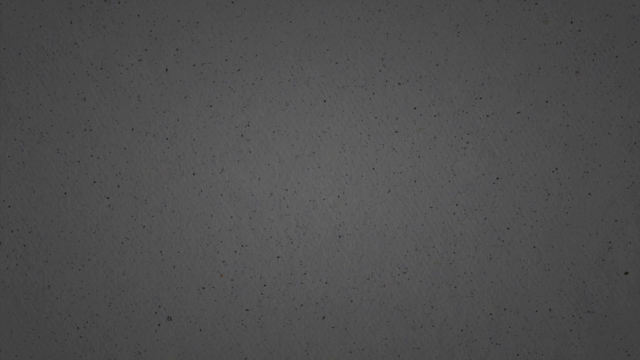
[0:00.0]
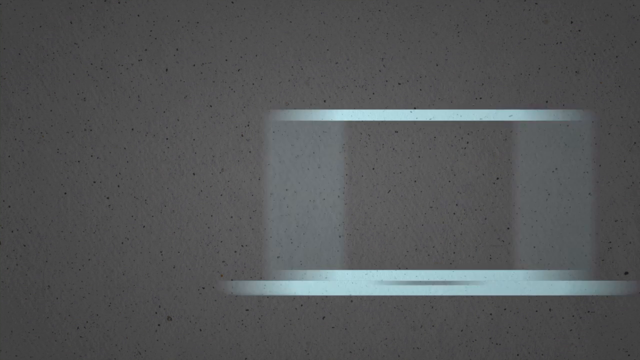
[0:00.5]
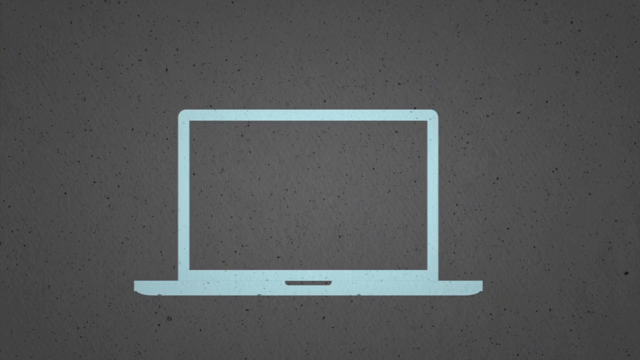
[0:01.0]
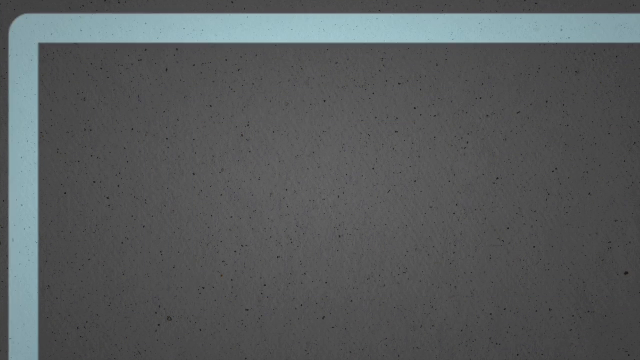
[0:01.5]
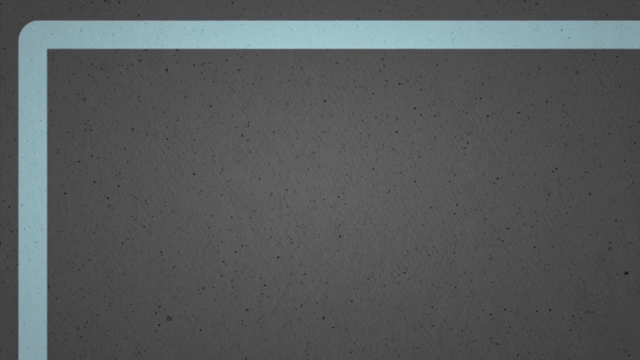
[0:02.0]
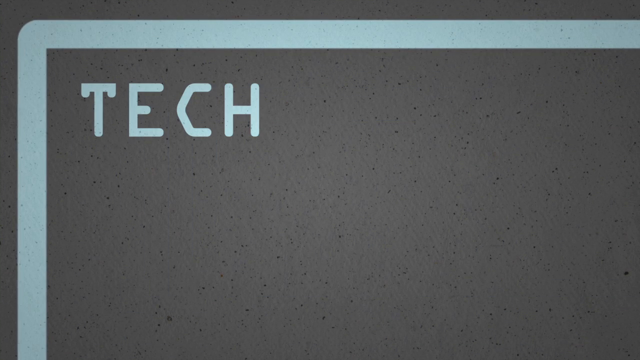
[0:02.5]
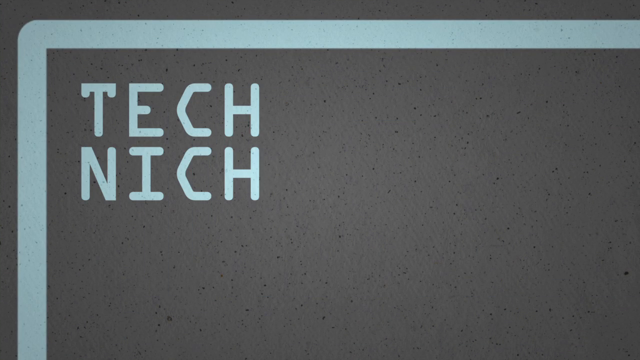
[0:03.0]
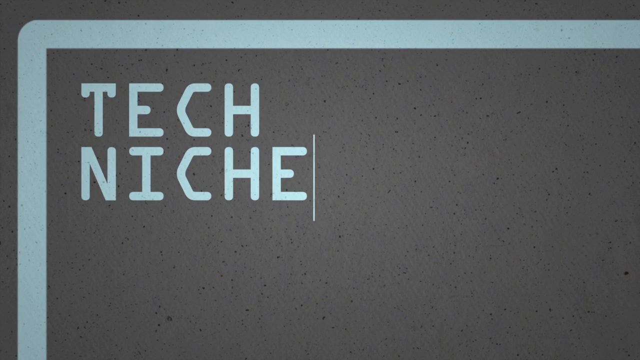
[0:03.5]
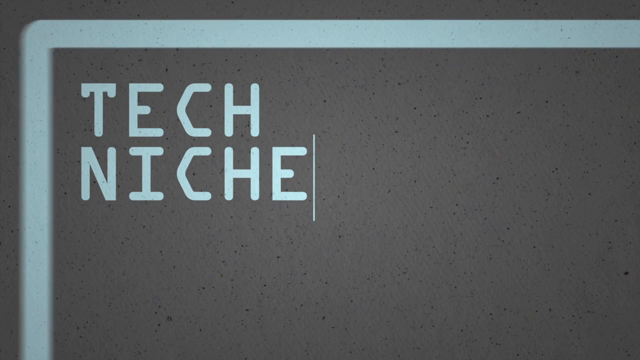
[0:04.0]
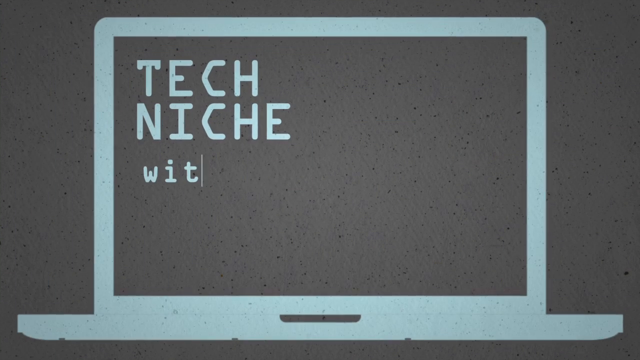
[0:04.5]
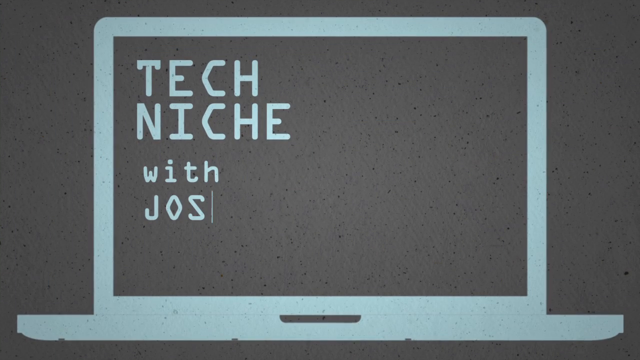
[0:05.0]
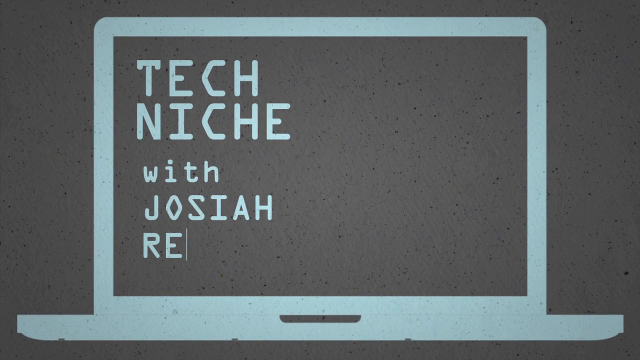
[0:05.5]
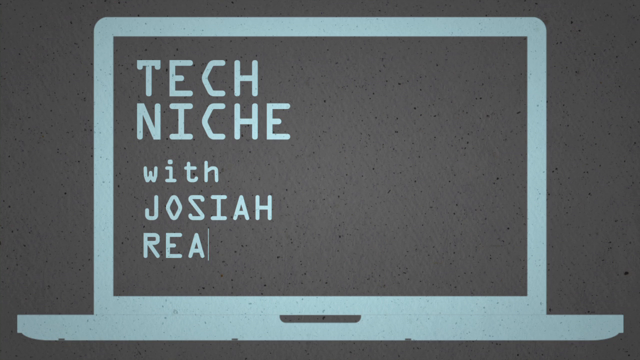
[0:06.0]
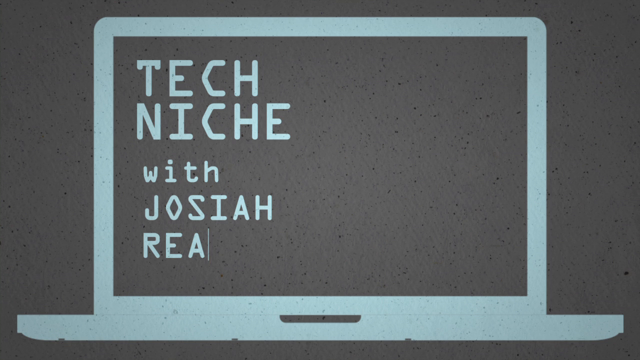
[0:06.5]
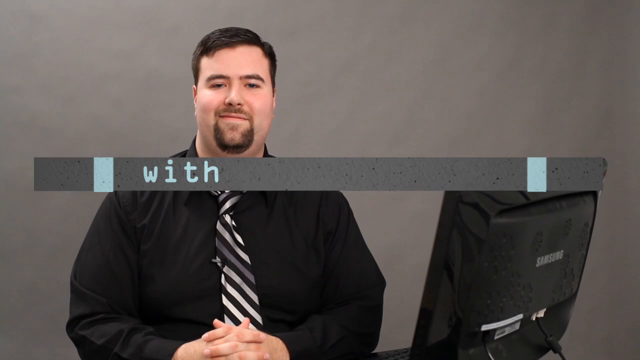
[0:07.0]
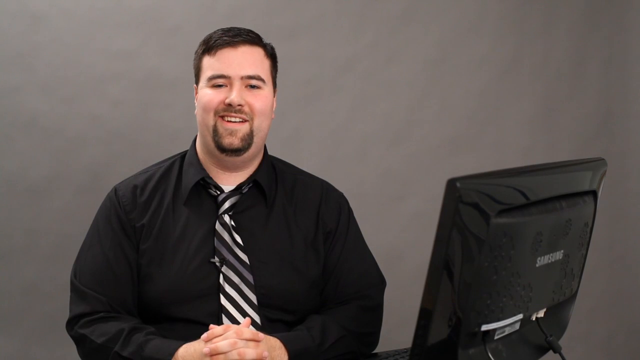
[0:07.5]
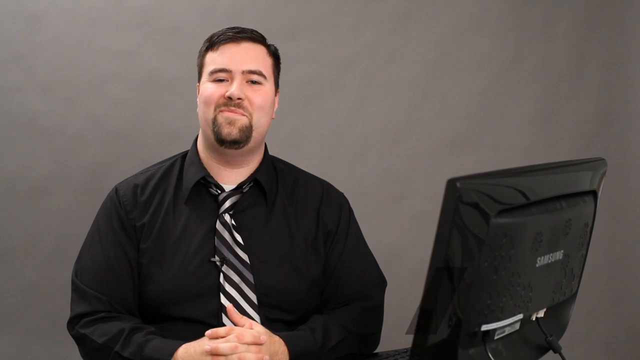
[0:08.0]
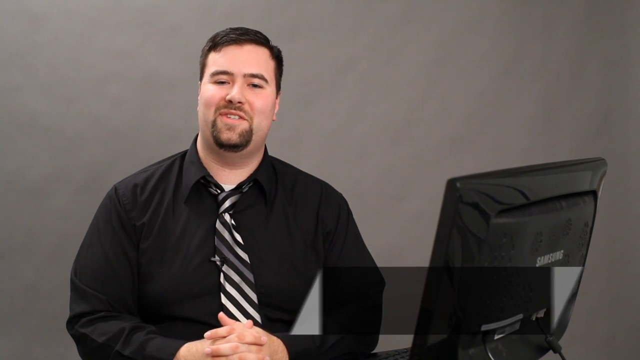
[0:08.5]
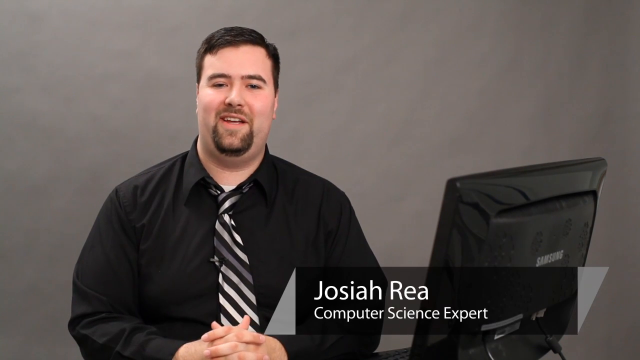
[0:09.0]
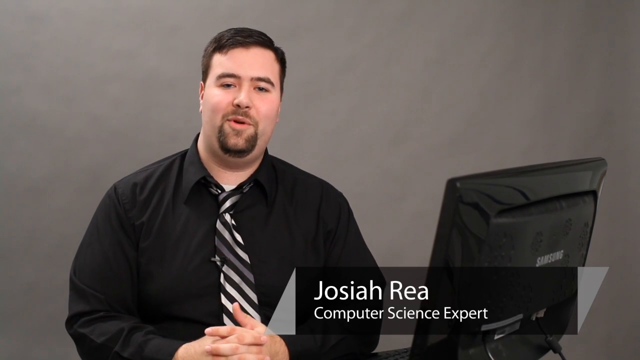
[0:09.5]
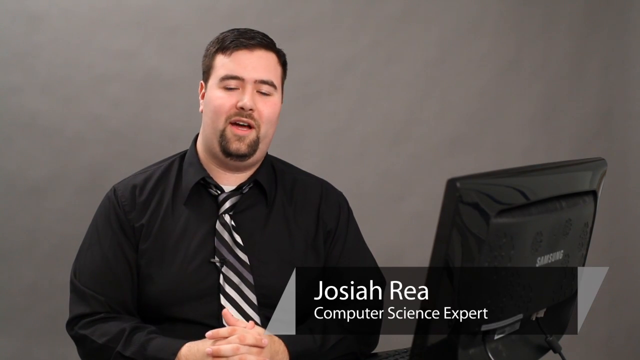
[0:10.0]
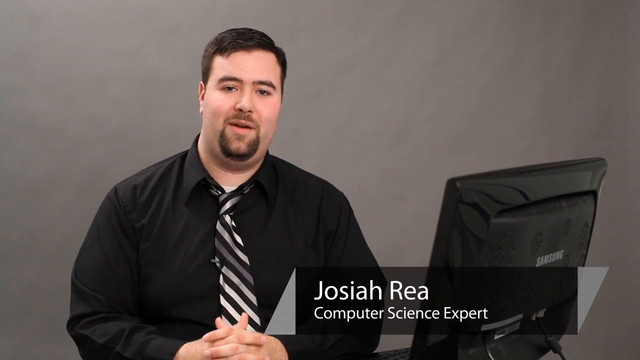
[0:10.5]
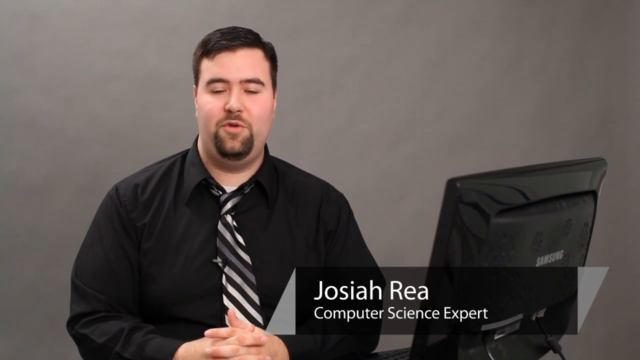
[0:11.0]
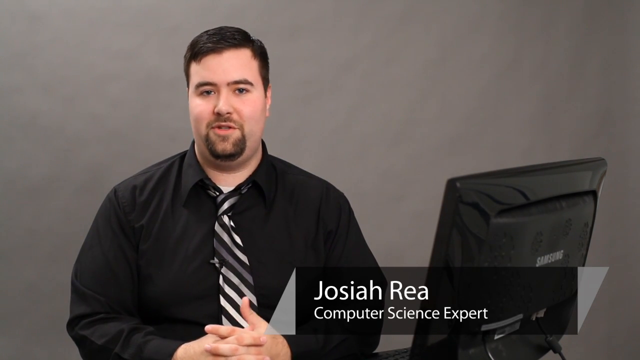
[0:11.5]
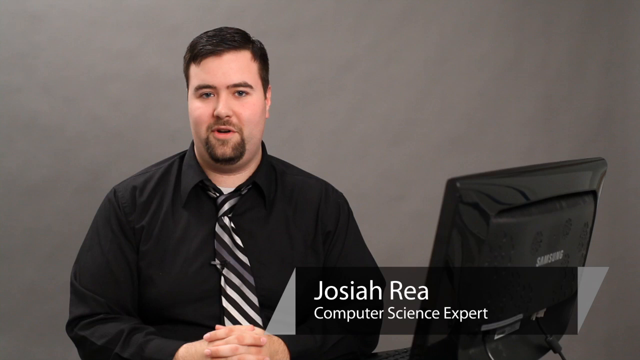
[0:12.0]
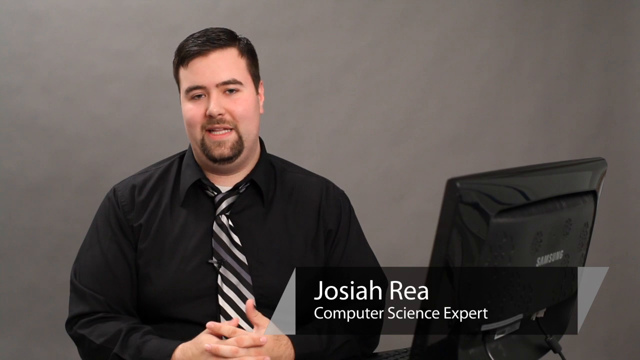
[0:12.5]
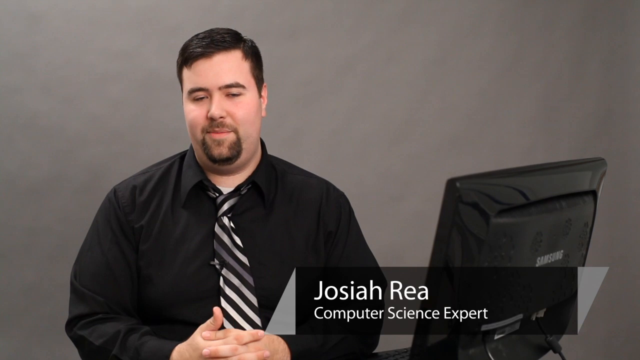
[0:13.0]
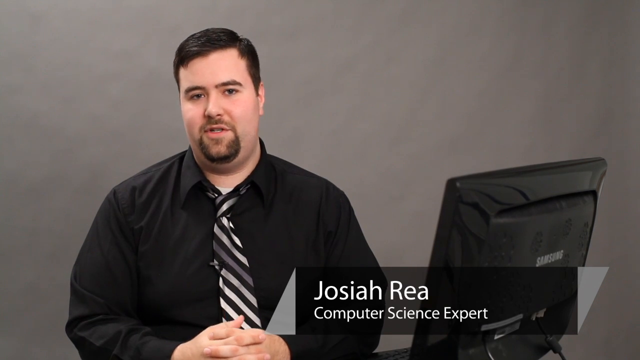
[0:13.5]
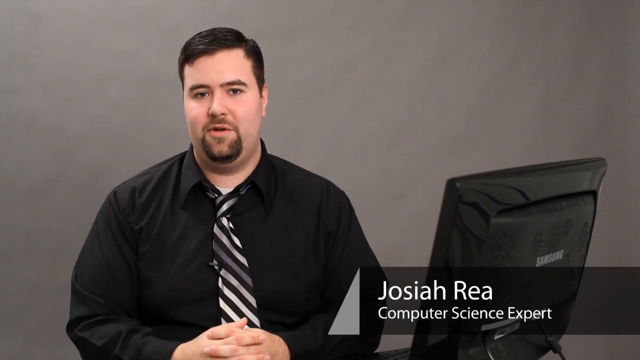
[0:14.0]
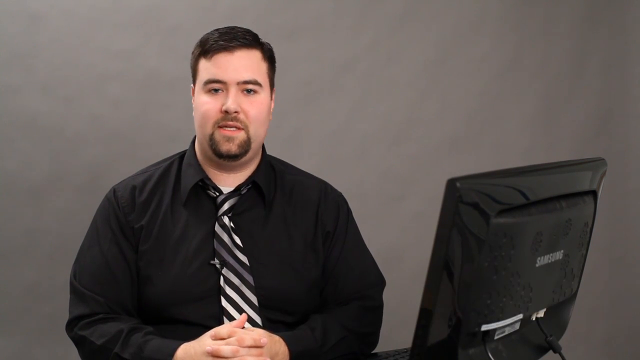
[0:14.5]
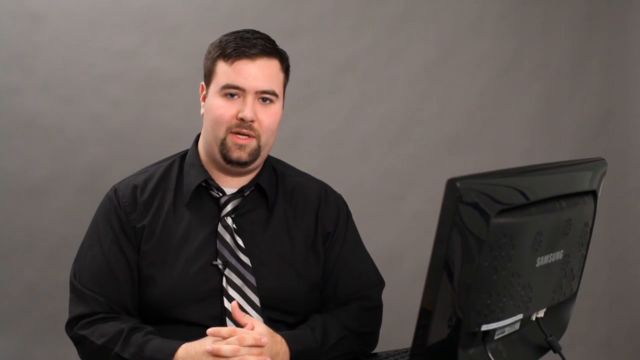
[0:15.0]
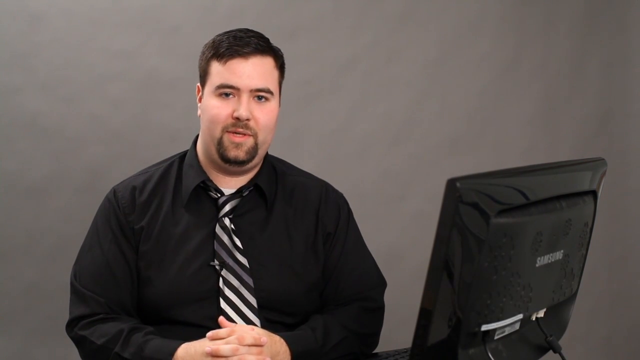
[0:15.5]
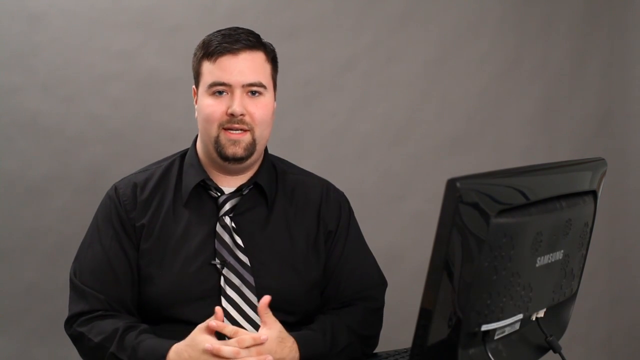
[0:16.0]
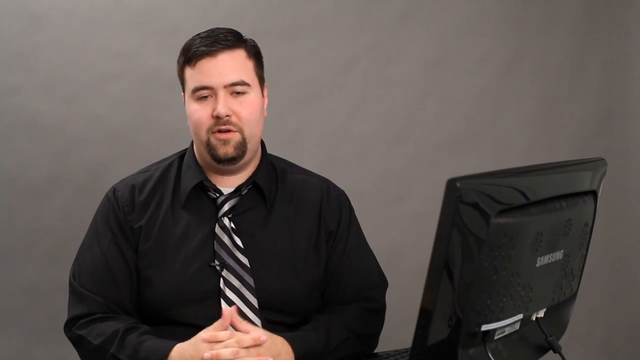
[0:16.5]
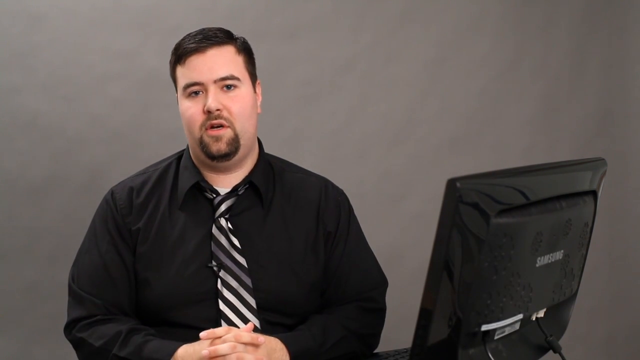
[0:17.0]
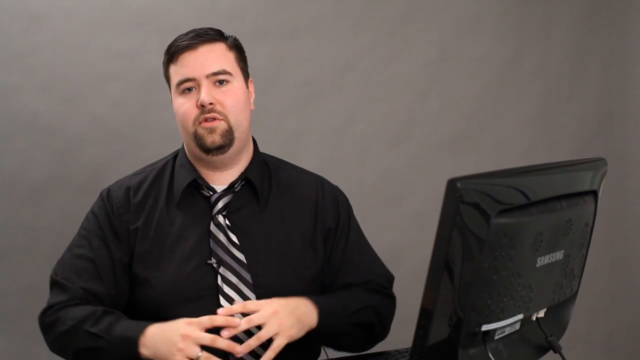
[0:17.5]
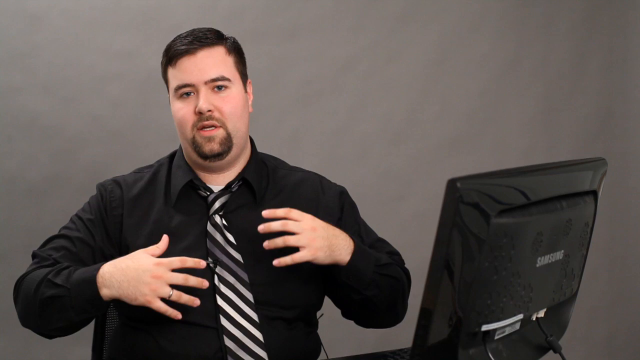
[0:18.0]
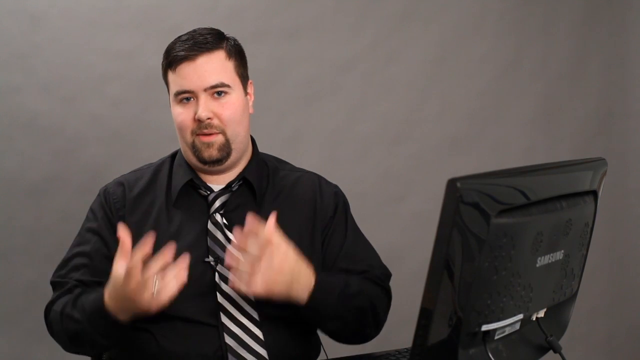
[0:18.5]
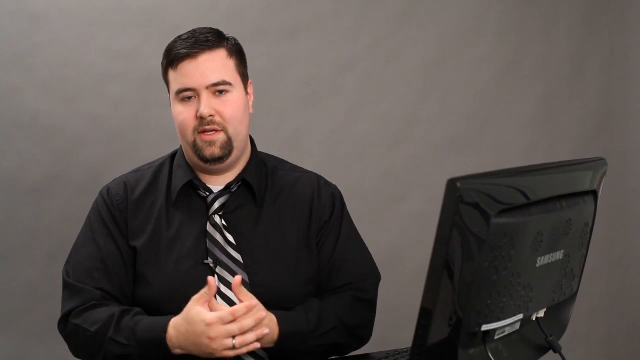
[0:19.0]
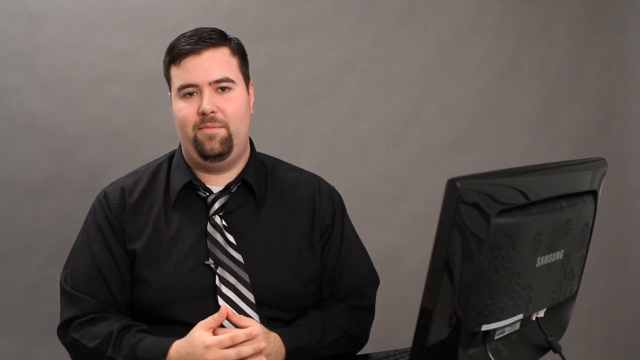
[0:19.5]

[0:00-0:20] A laptop computer appears, drawn in what seems to be a cartoon-like style, and then text comes up reading "tech meets with Joshua Reeve". Next is a Caucasian man, maybe around 28 or 30, wearing a solid black long-sleeve shirt with a collar and what looks like a black, gray and white striped tie. He has a mustache and beard that kind of connect, more of a goatee-looking beard. He is sitting in front of a Samsung computer that looks like an all-in-one, and he is speaking. His hands are kind of folded together, as if praying, in front of his lap, and he continues to speak.